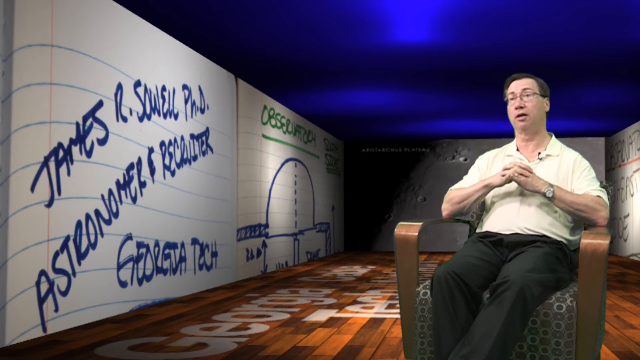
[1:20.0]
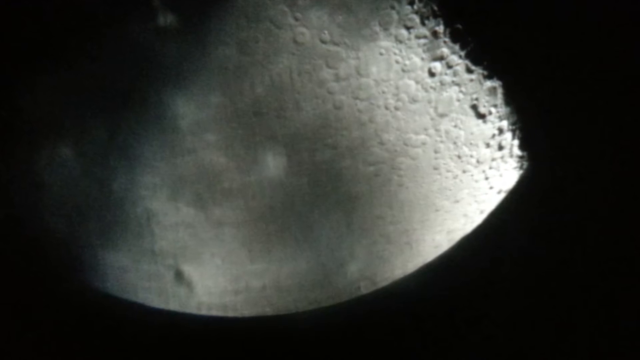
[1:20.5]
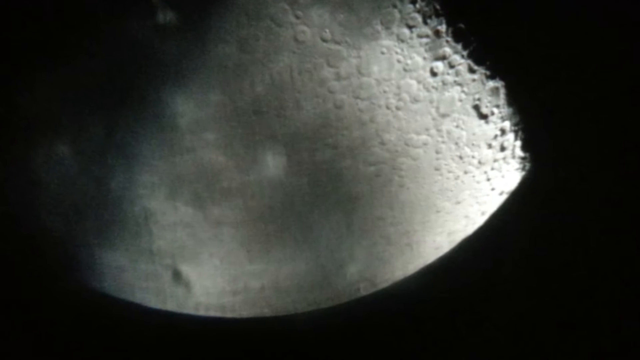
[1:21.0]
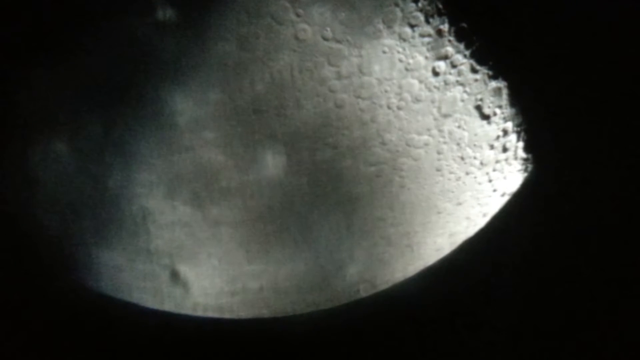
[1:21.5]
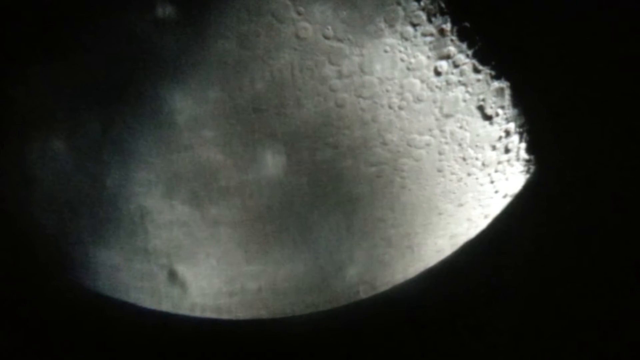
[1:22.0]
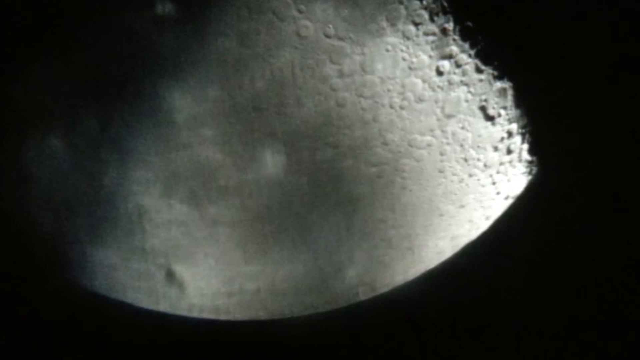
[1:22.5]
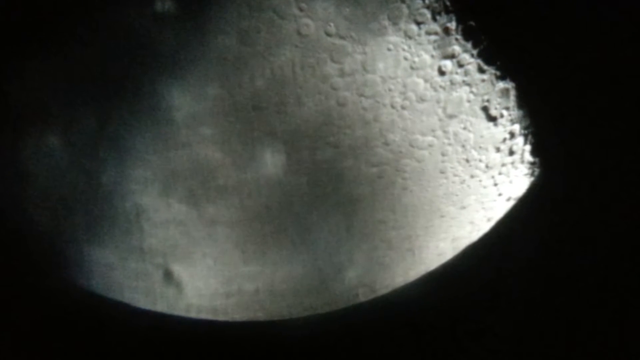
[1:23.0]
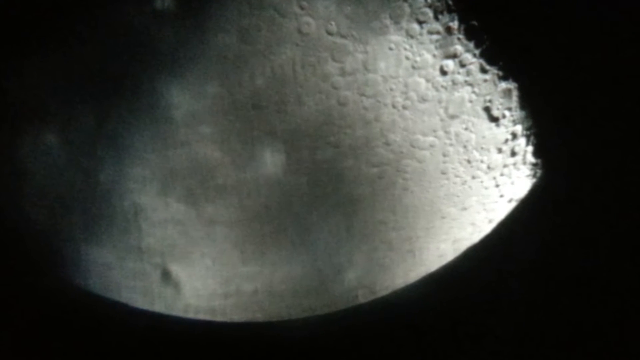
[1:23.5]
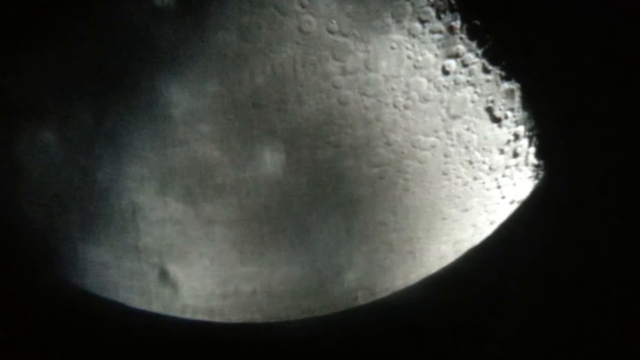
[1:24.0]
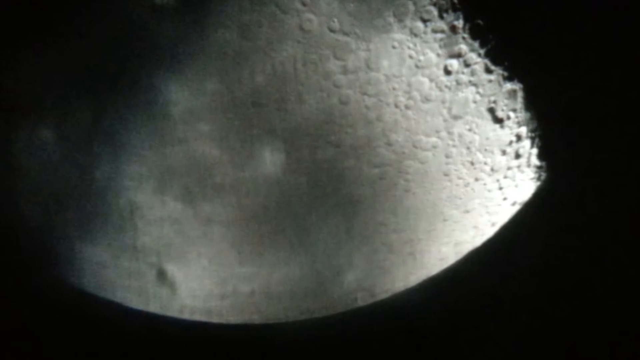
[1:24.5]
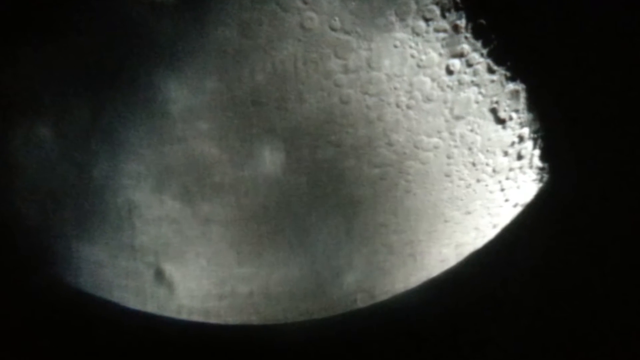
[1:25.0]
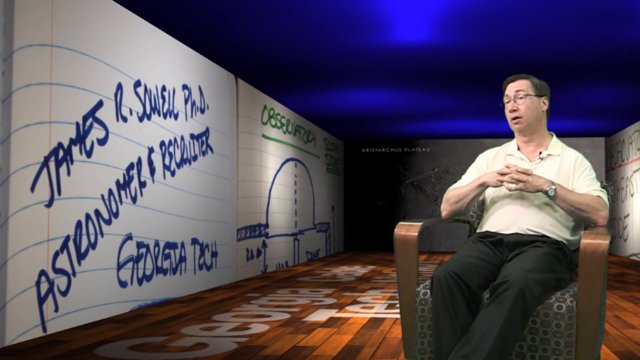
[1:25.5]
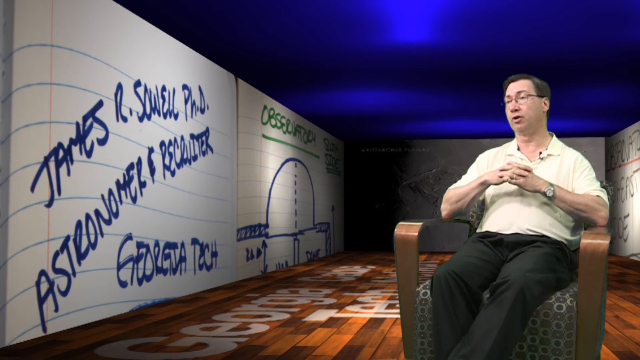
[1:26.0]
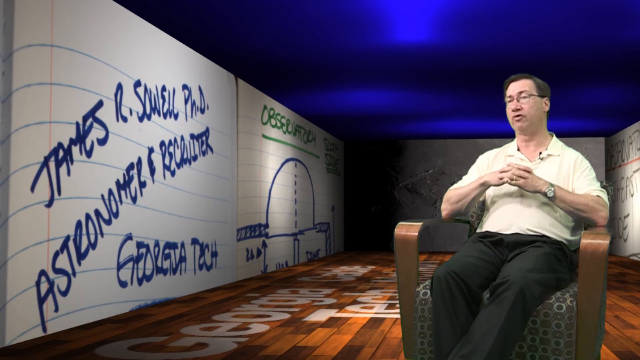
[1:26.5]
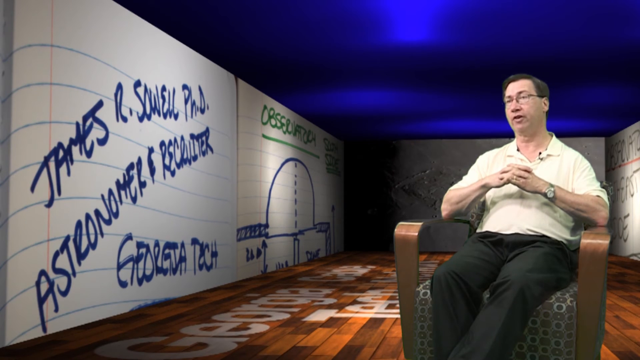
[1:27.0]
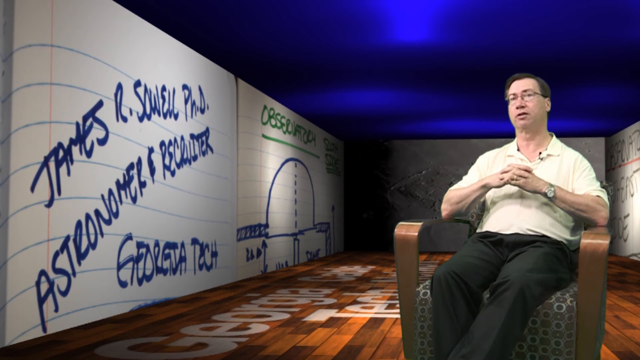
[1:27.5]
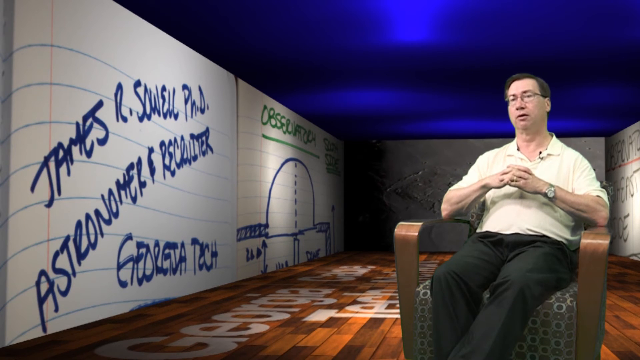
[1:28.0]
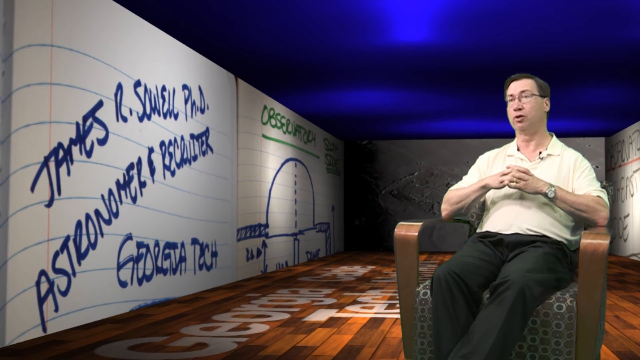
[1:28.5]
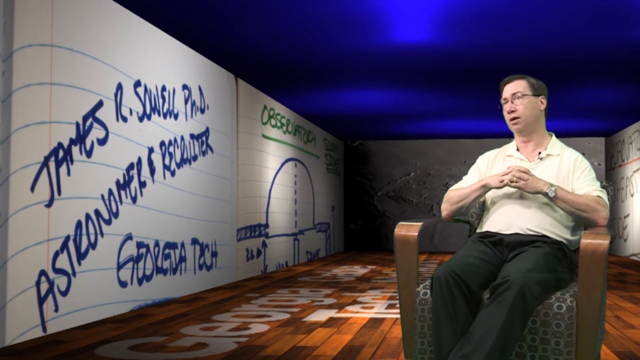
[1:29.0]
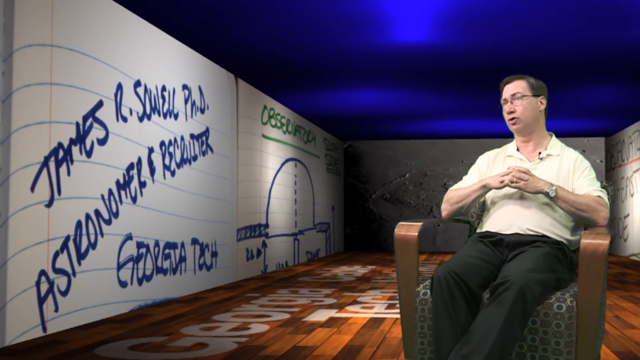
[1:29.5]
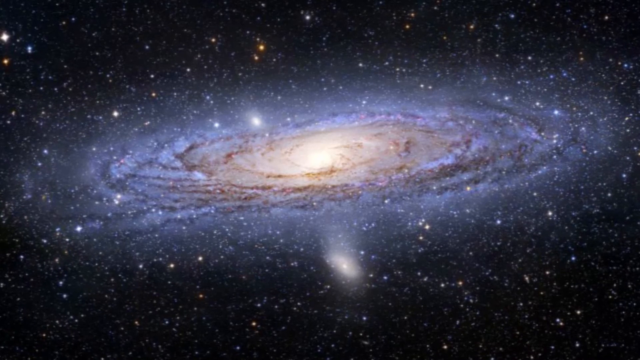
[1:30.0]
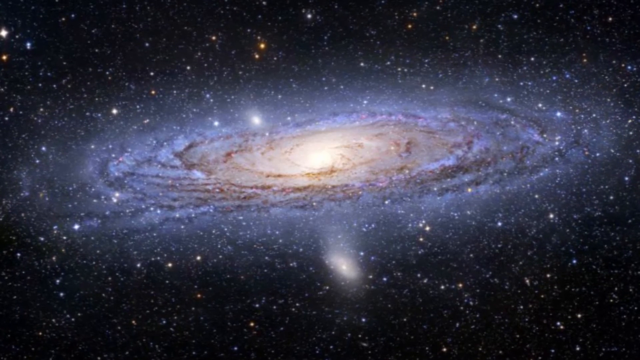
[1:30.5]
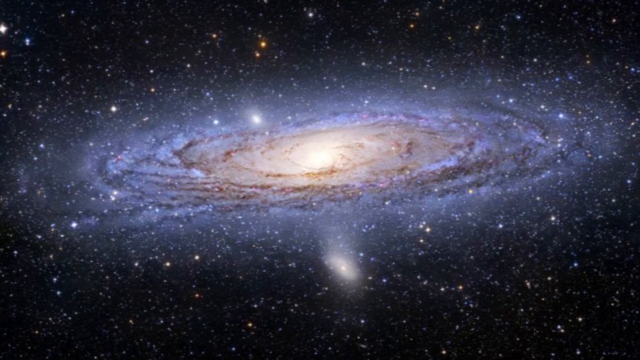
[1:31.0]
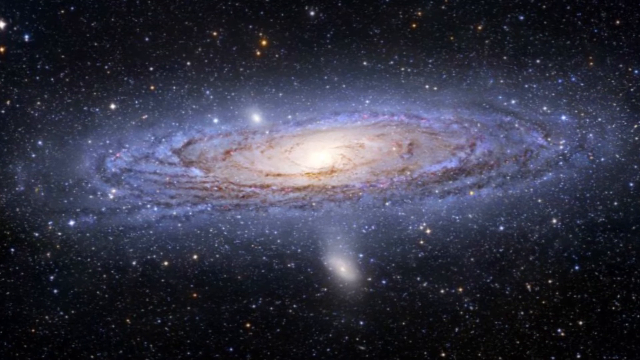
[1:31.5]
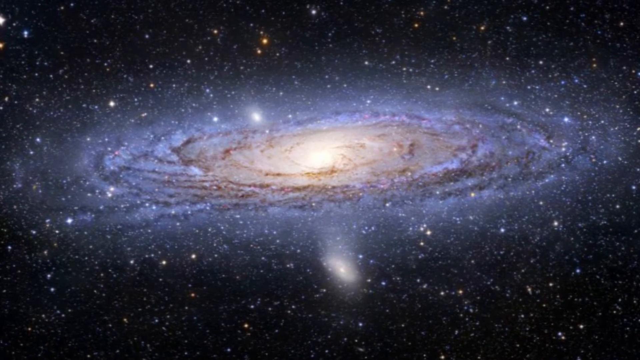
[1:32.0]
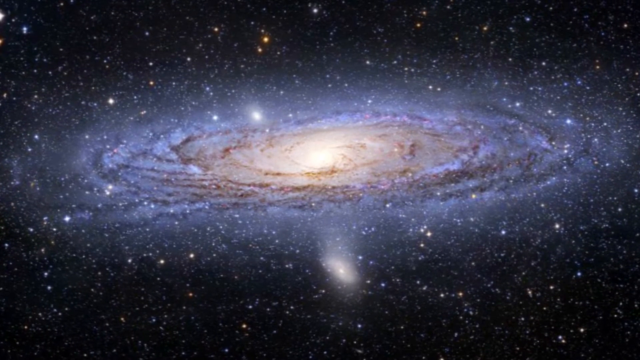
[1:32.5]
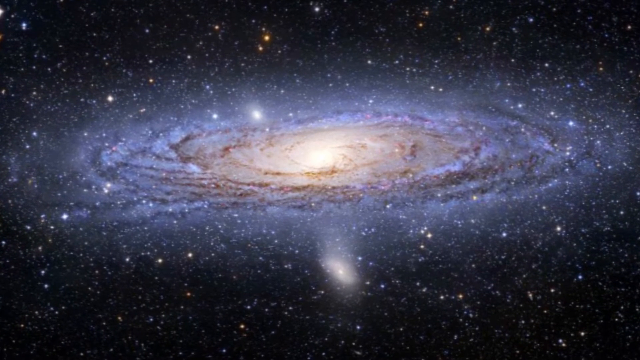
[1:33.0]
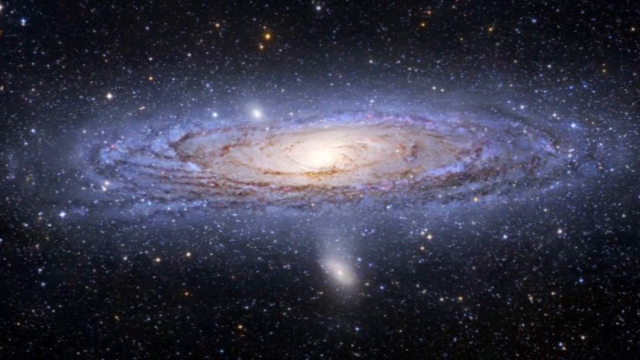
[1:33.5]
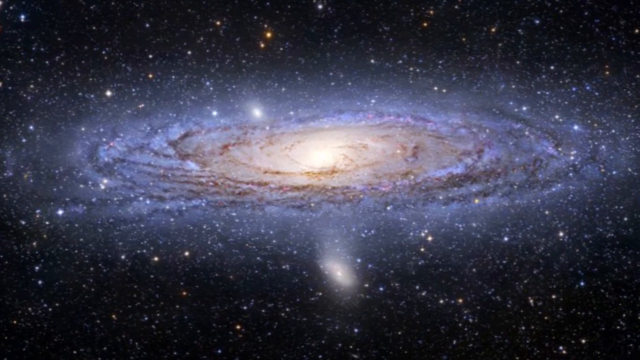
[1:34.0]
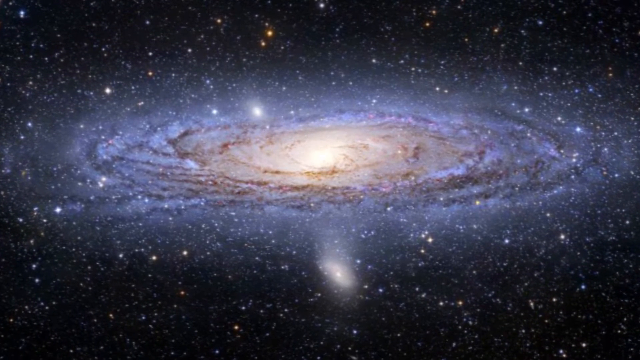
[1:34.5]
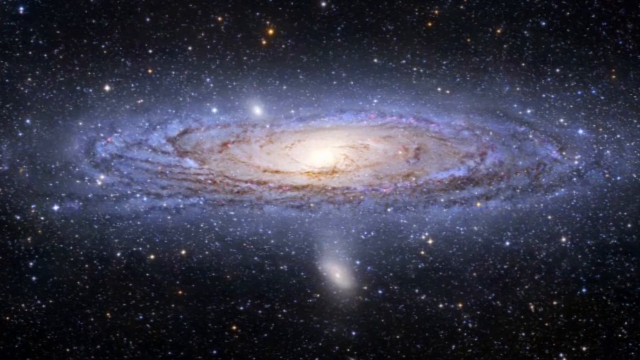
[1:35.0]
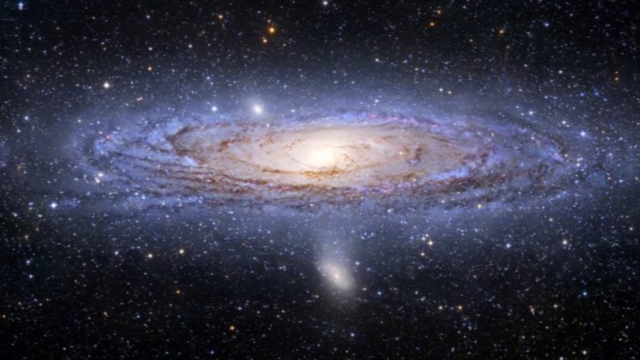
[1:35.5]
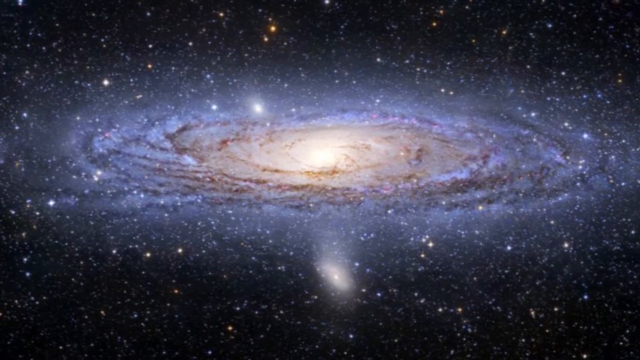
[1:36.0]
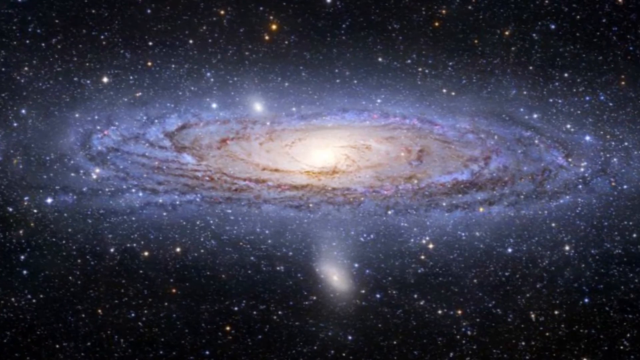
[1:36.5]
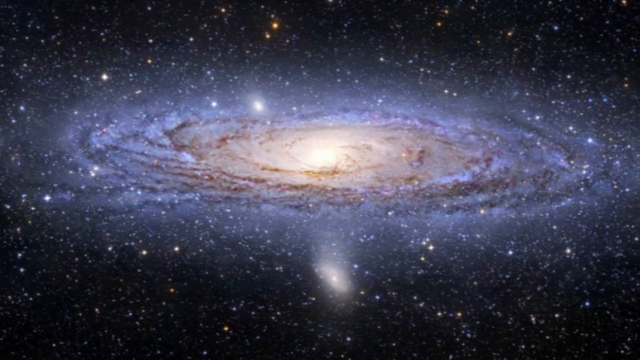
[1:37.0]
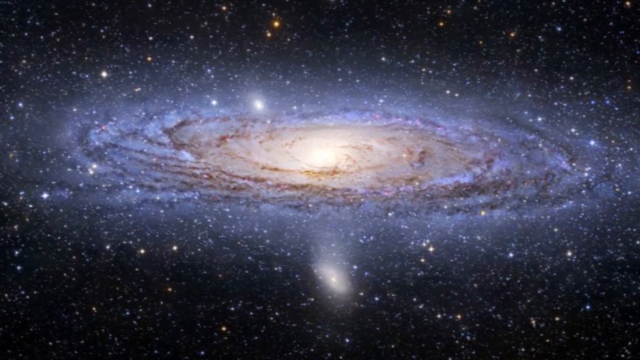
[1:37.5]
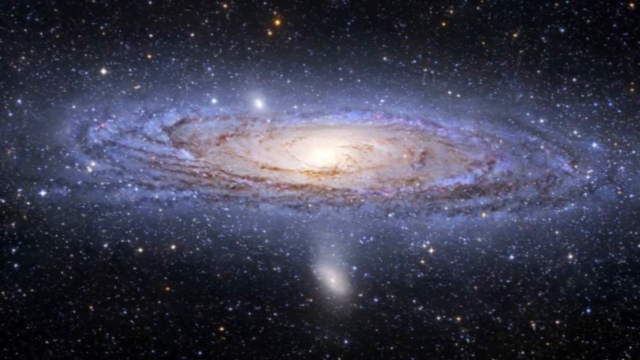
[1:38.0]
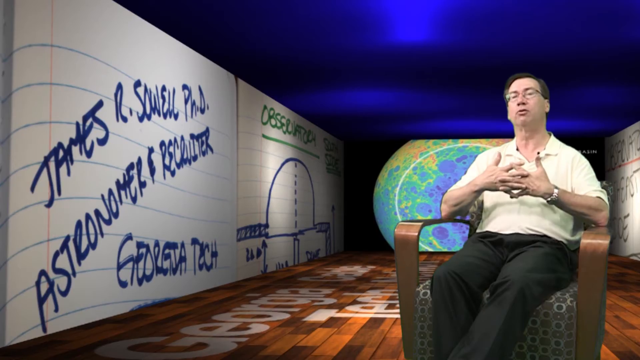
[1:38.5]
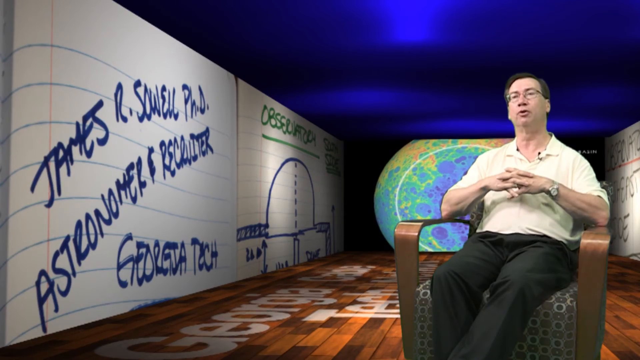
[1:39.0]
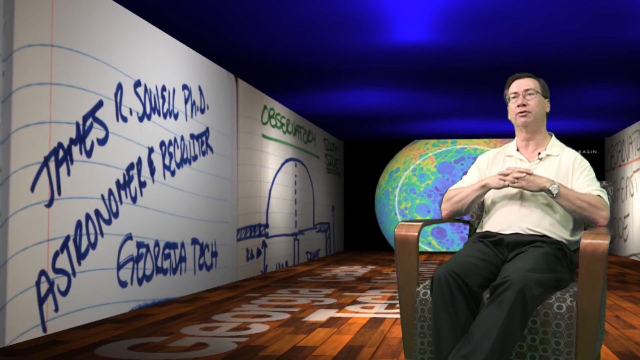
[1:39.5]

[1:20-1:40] The video zooms in on the moon, possibly through a telescope. The scene changes back to the man in the wood chair, then to one of the galaxies in outer space; the scene is fluid and moves. It then returns to the man in the wood and fabric chair. His hands are clasped together and resting in front of his chest, with a silver watch on his left hand, and his elbows rest on the wood armrests, which come from the back of the chair, go forward and curve down to the front bottom of the chair. No one else is in the room with him, and the background is much the same. The blue ceiling is probably not a real ceiling but could be an artfully painted one. There are no visible lights on the ceiling, and the screen behind him is black. To his left is another large paper with some writing on it that cannot be read.